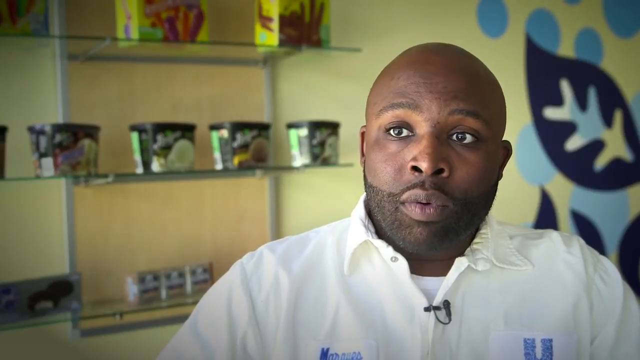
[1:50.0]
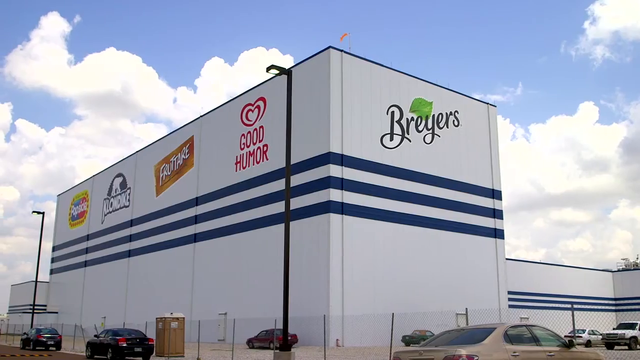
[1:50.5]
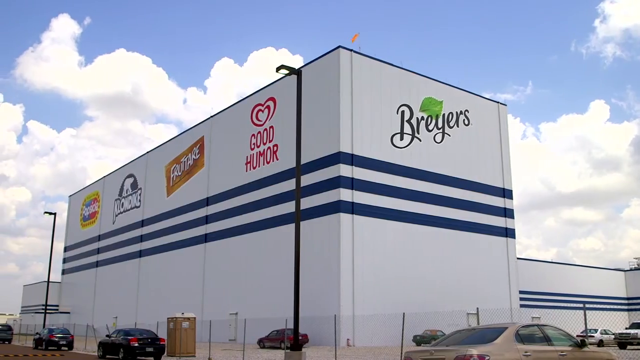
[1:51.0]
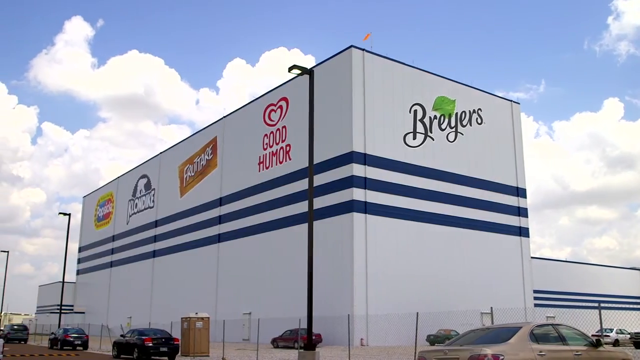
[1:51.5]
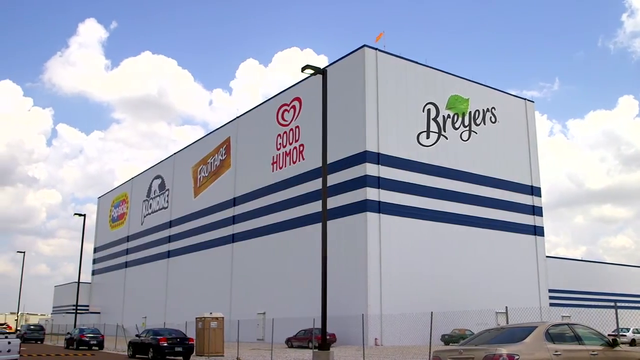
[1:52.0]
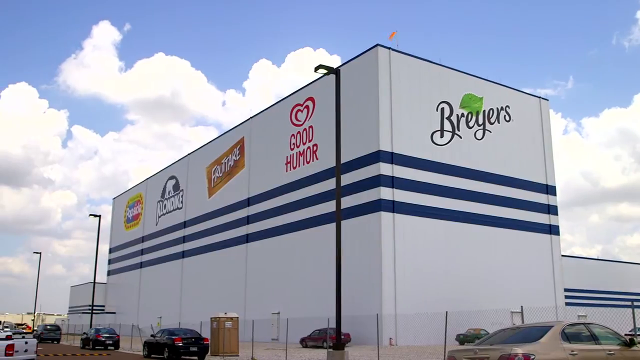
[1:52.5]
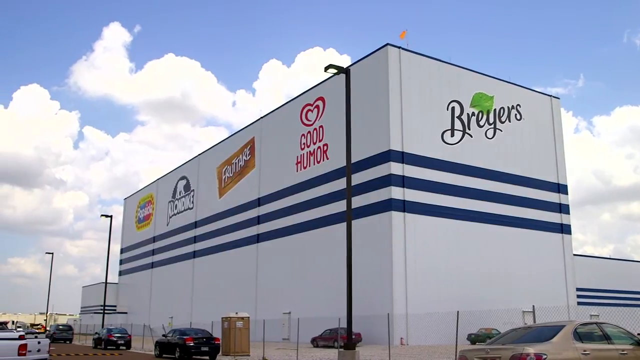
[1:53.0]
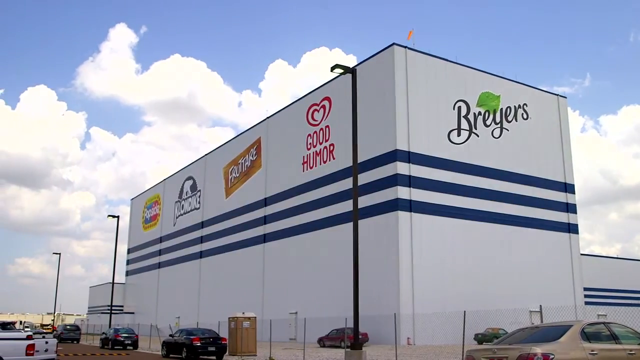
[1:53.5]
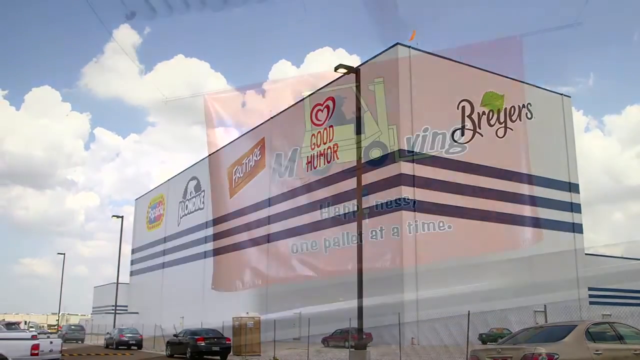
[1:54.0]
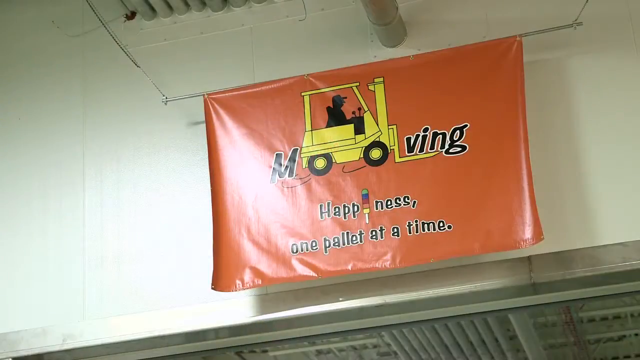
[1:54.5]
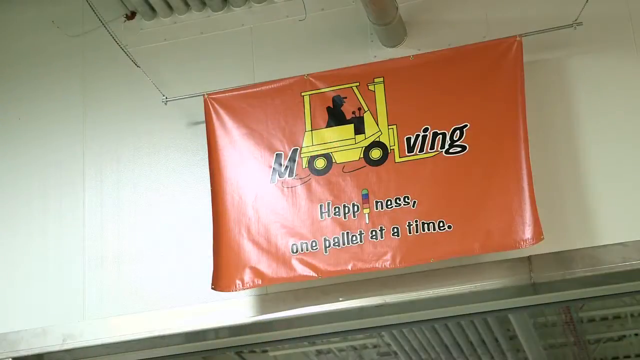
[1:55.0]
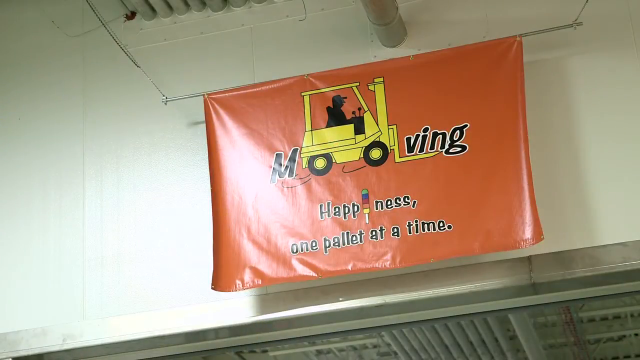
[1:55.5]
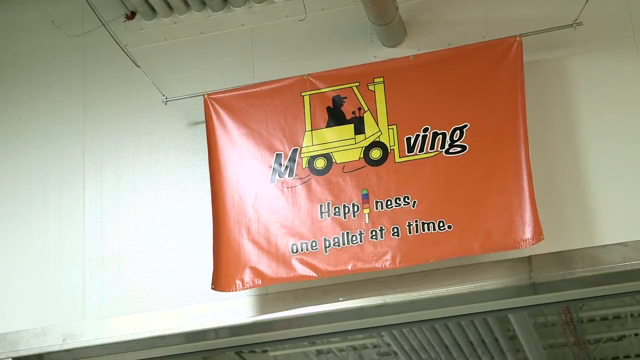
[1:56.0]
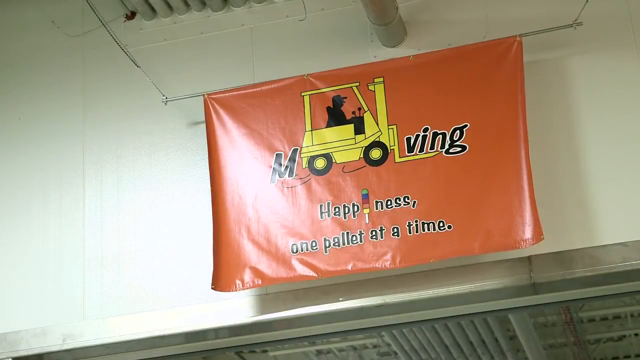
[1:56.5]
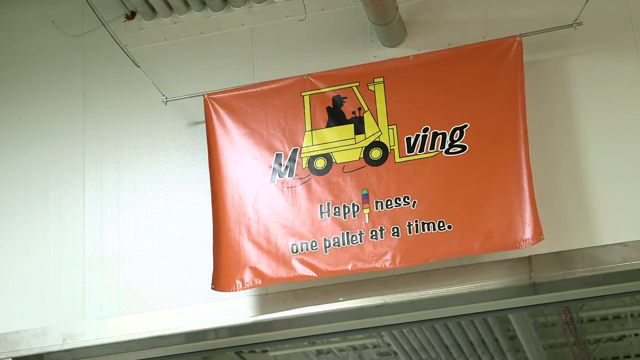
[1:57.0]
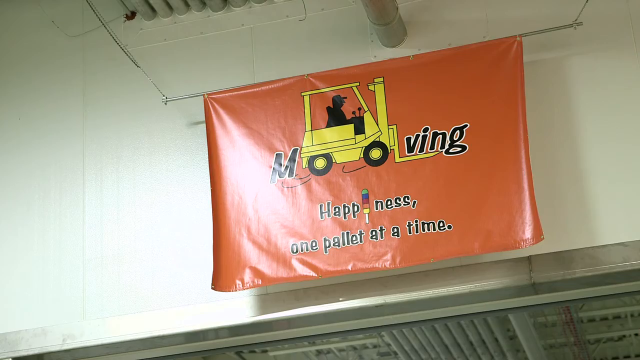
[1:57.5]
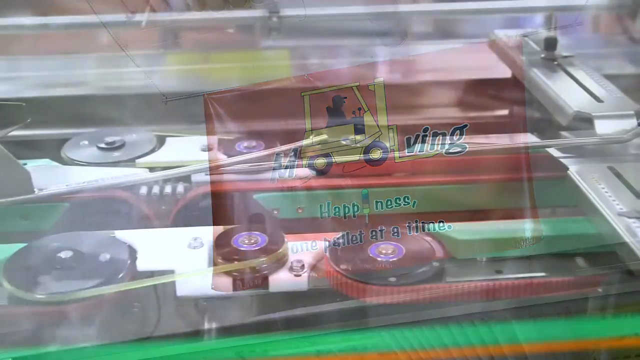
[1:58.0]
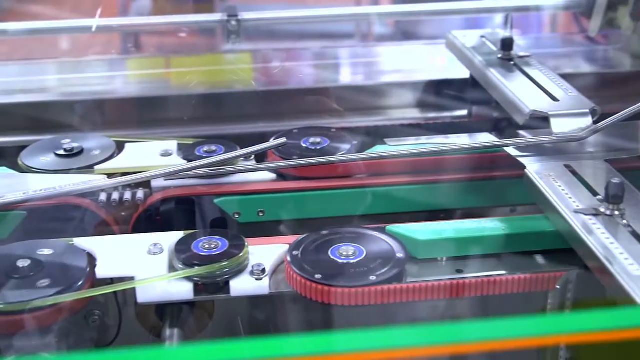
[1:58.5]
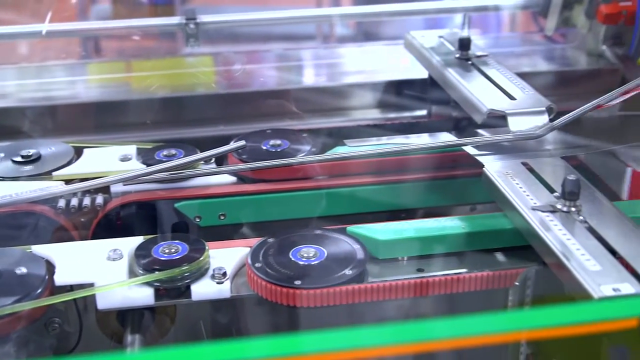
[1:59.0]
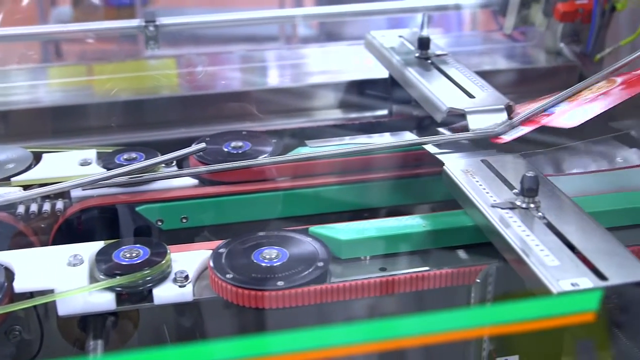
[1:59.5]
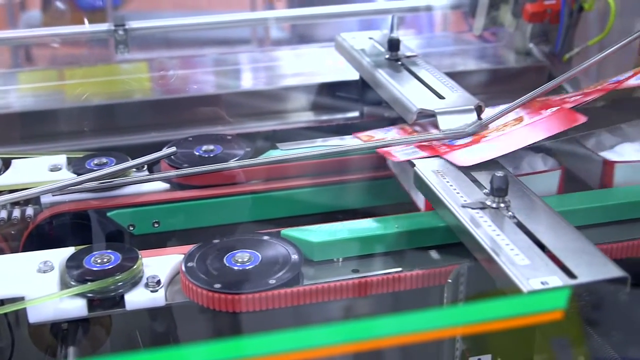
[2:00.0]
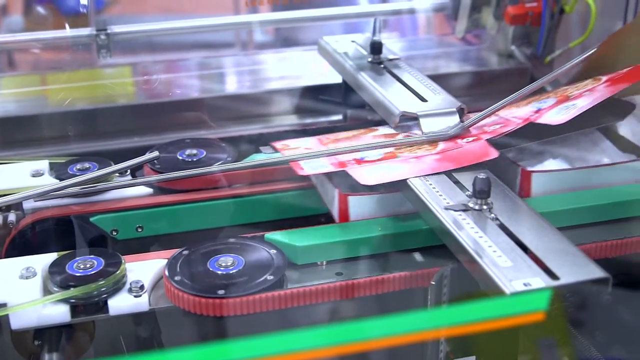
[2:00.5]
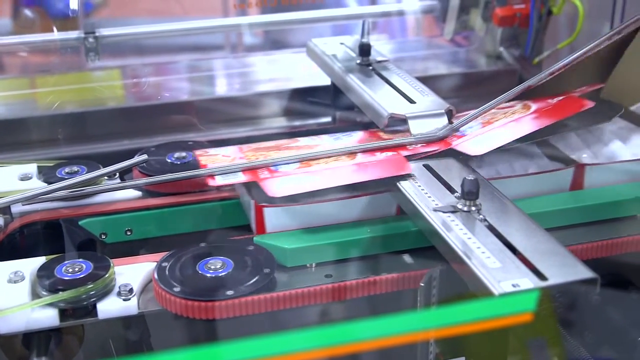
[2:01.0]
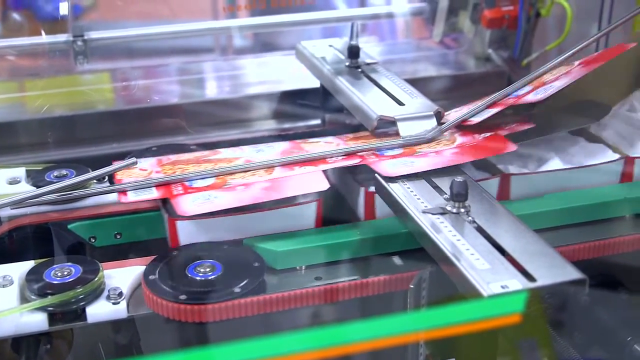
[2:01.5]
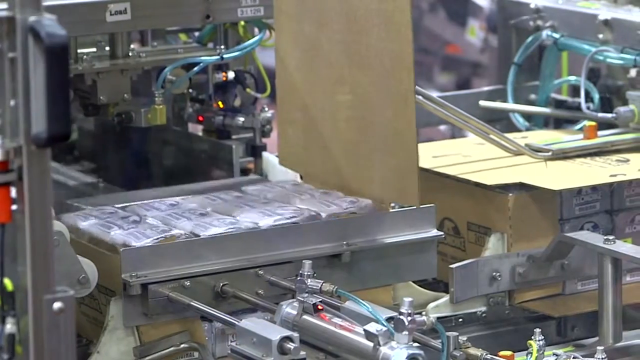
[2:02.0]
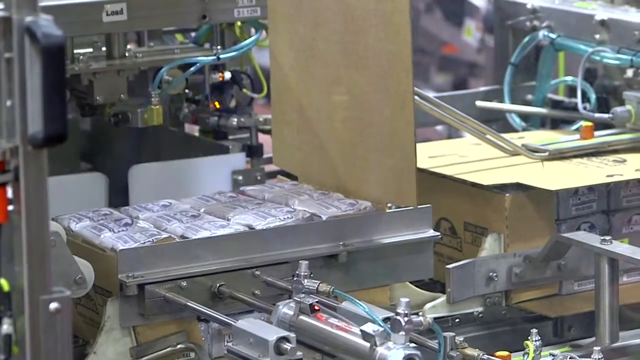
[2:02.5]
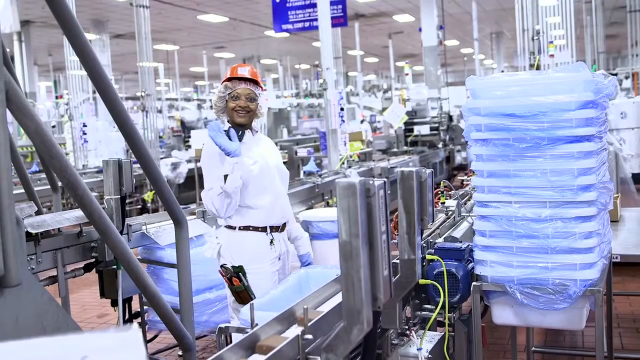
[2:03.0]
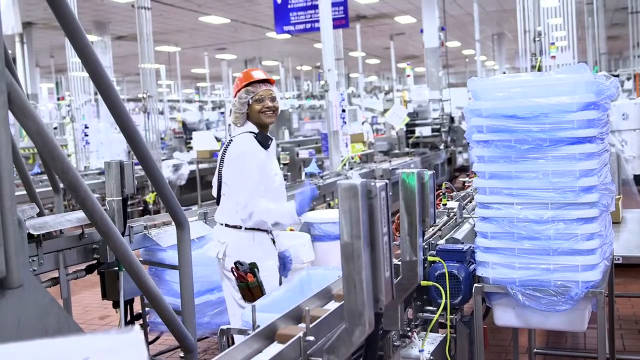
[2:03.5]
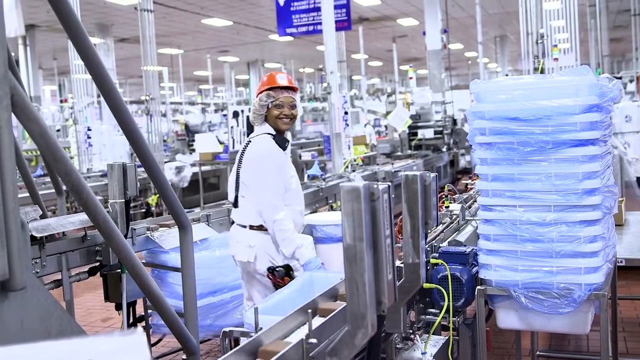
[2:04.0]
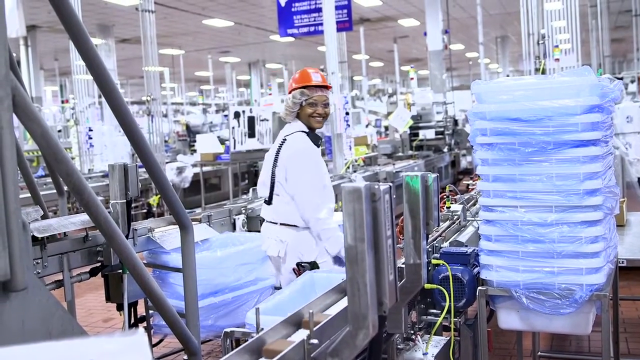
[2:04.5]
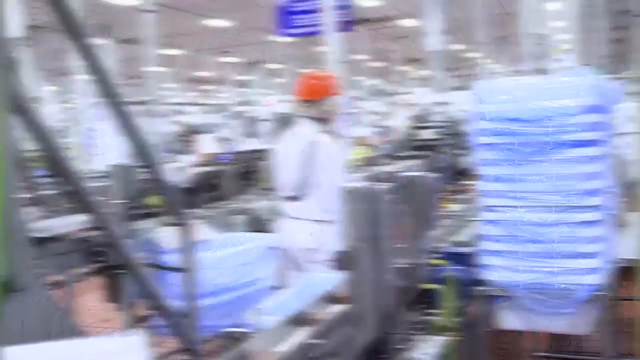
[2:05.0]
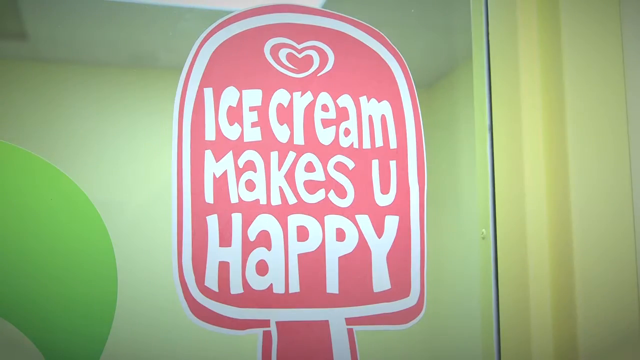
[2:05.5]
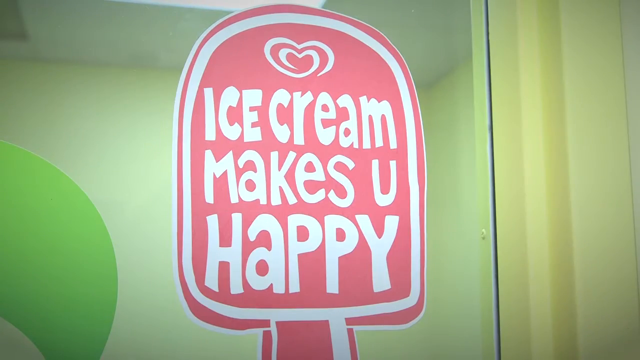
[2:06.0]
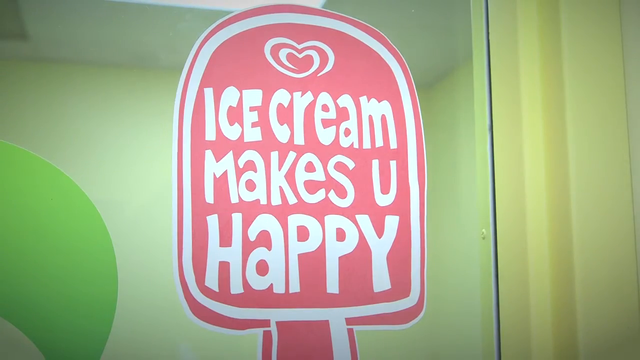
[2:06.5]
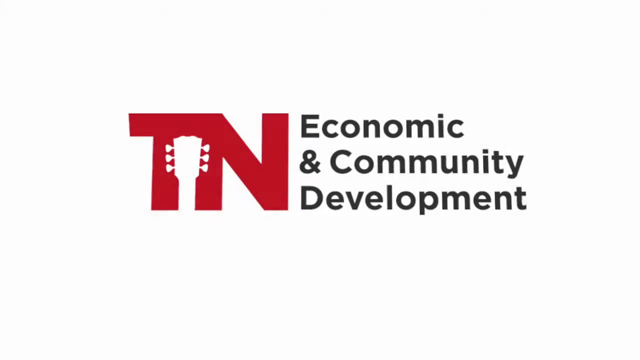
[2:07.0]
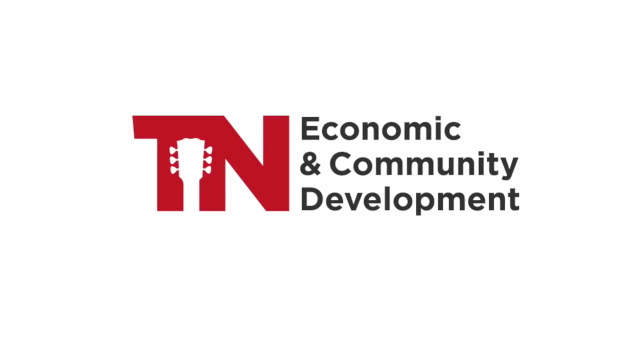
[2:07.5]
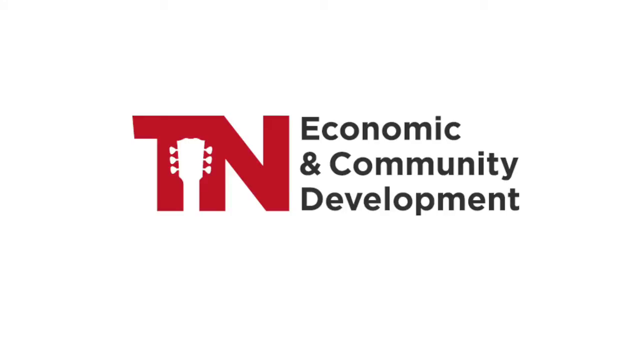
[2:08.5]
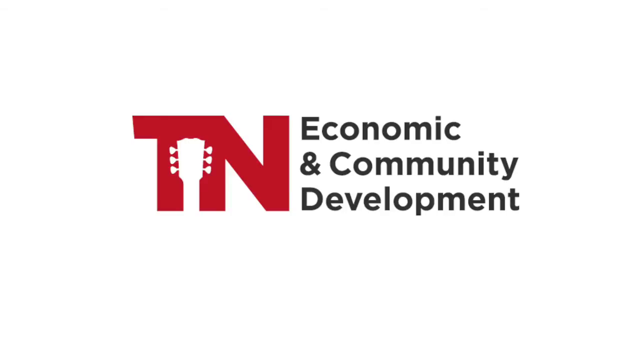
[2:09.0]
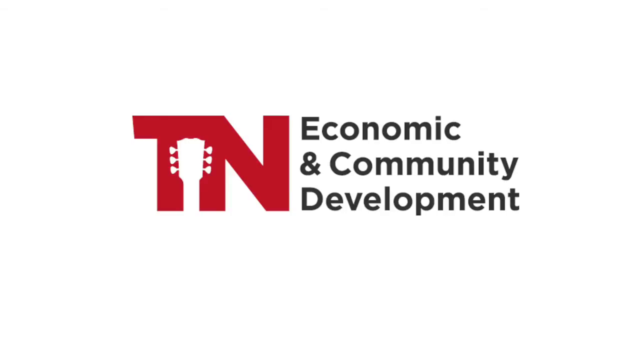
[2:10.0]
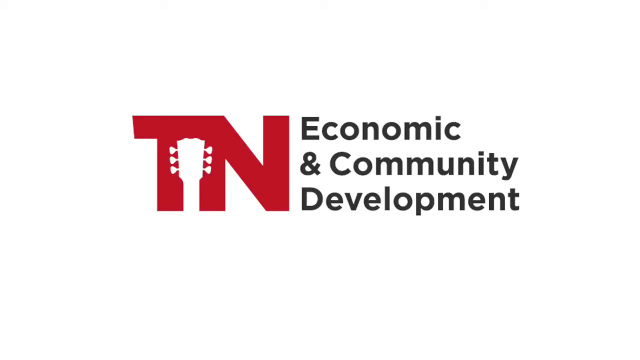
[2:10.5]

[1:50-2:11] The workers prepare the packaging, folding boxes and grabbing the ice cream. One of them, an African-American woman wearing a hairnet, goggles and blue plastic gloves, appears to wave at the camera. The factory workers appear to grab the boxes and fold them into shape so they can hold the items. Each of the workers wears a white lab coat, goggles, a hairnet, an orange helmet and blue gloves as they take the ice cream and place it inside its original boxing. A man drives by in an empty forklift bearing the Toyota logo, smiling with his goggles on. The scene transitions outside to a sunny blue day with lots of clouds, showing tractors, a large parking lot that appears to be empty, and one solo 18-wheeler with its trailer. Finally, the Breyers logo, the Klondike logo and the Popsicle logo appear, followed by text that states "Klondike Convington and Convington will have the world's greatest extrude stickless lines".